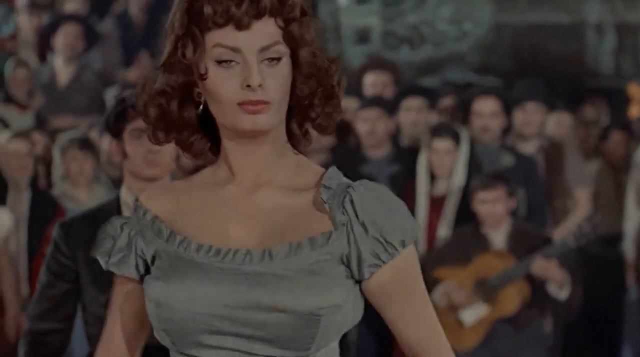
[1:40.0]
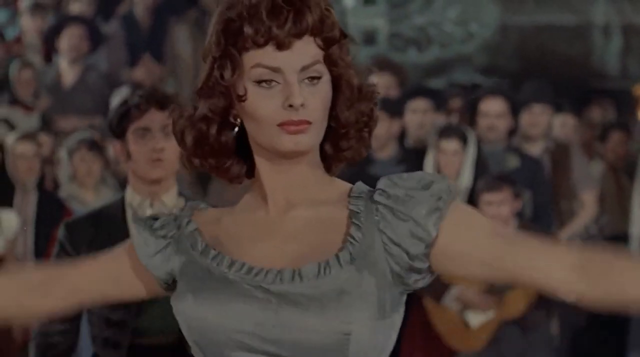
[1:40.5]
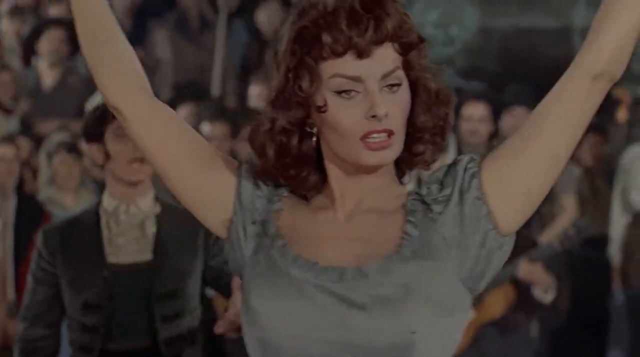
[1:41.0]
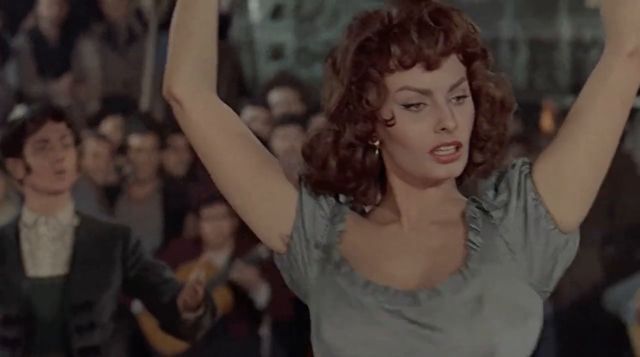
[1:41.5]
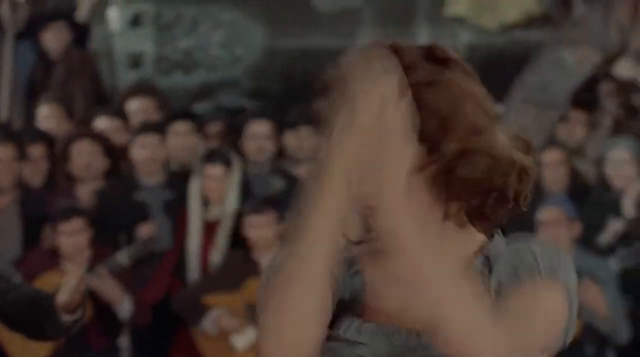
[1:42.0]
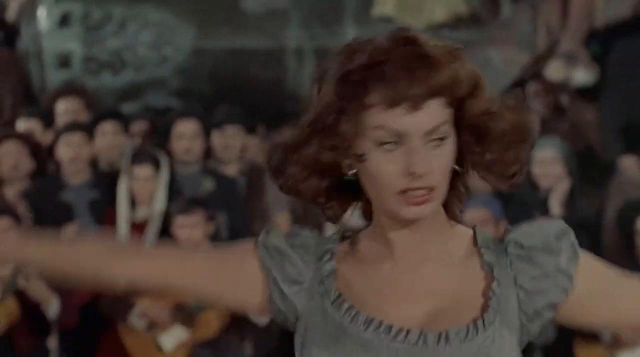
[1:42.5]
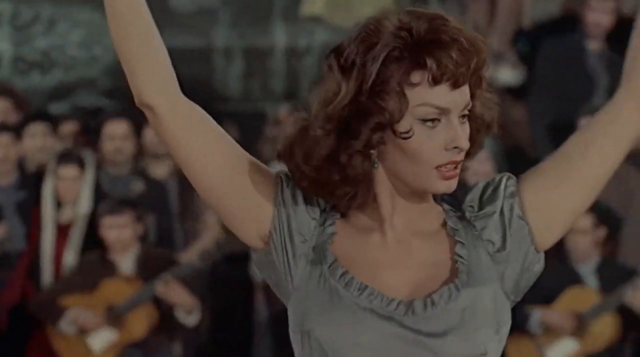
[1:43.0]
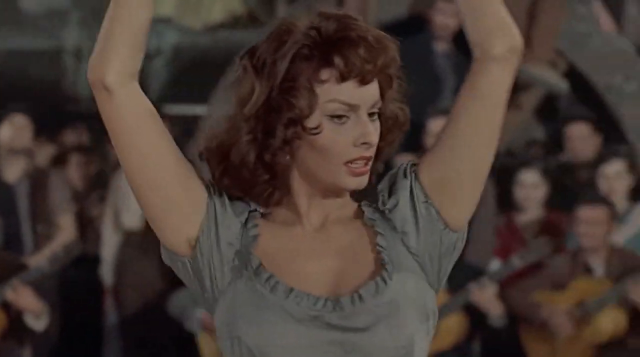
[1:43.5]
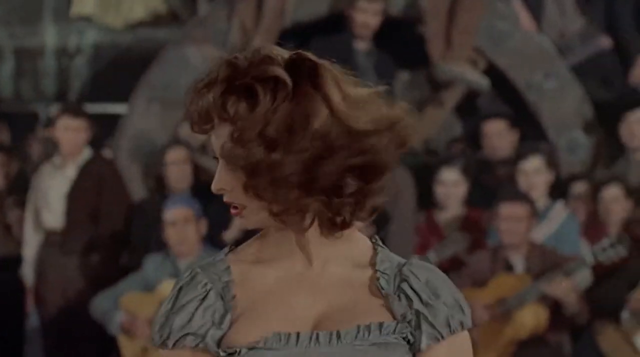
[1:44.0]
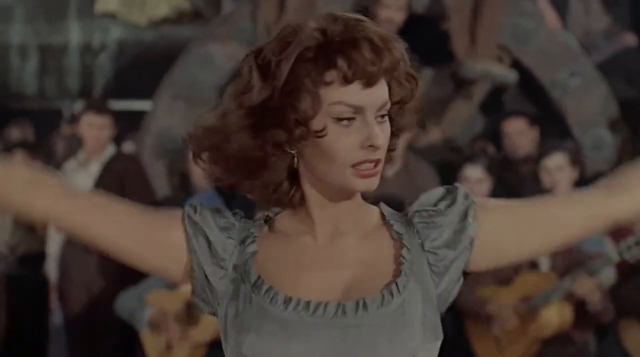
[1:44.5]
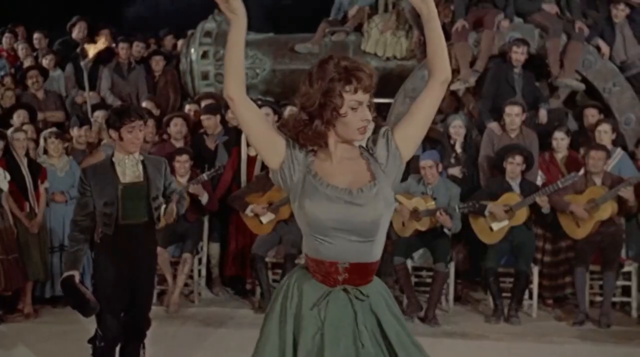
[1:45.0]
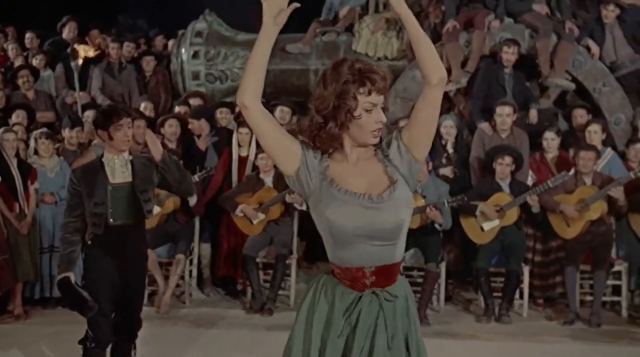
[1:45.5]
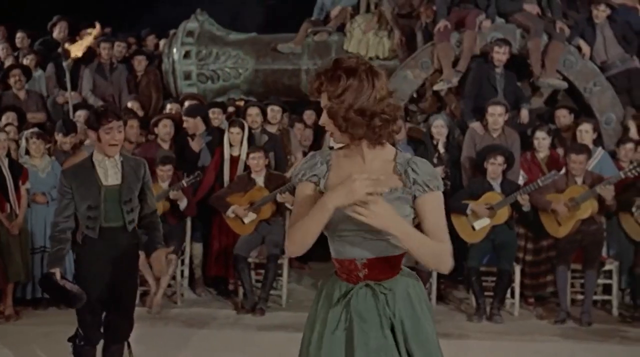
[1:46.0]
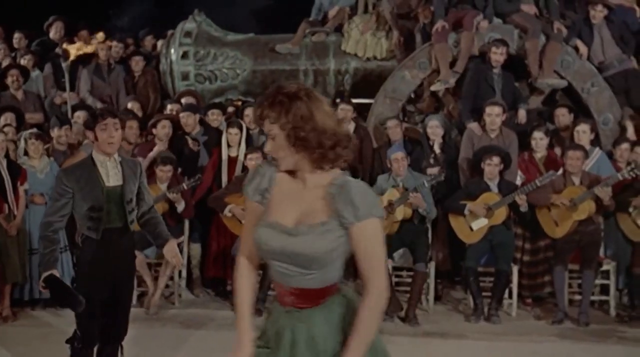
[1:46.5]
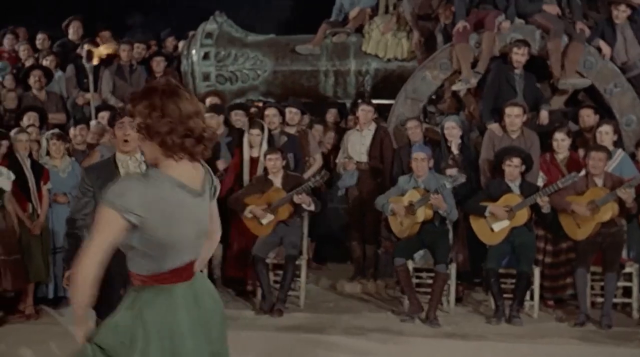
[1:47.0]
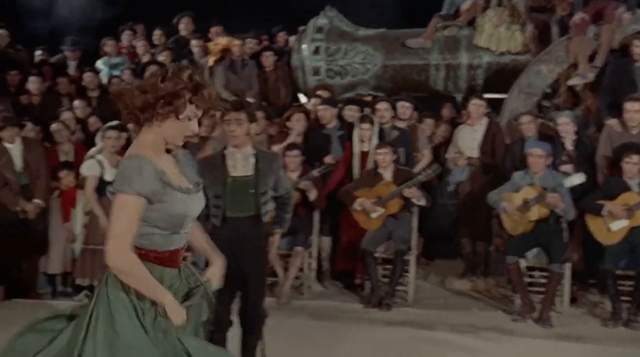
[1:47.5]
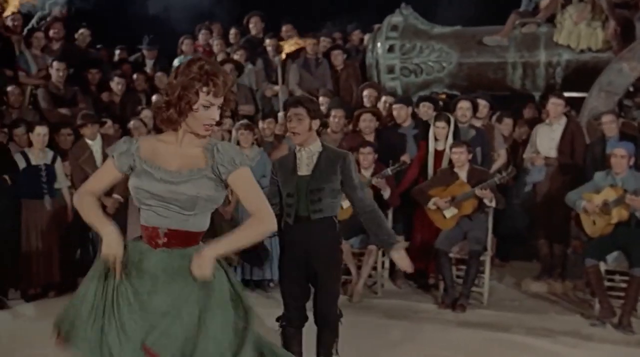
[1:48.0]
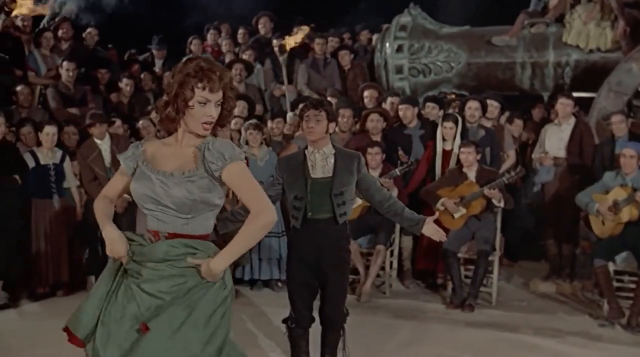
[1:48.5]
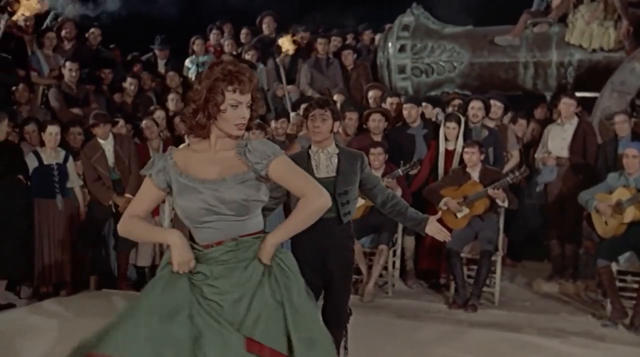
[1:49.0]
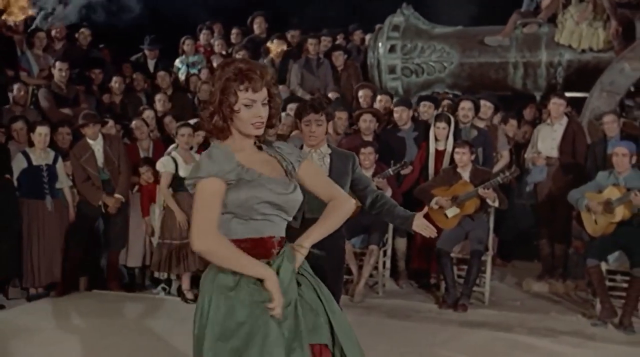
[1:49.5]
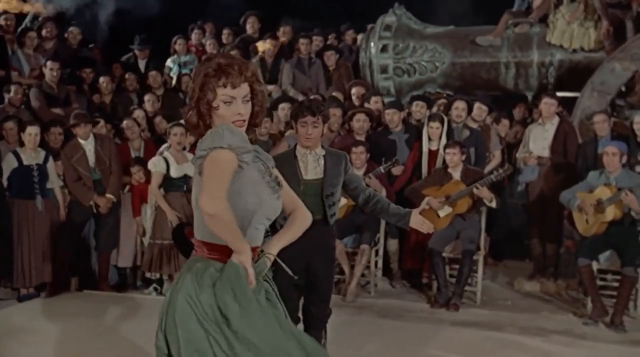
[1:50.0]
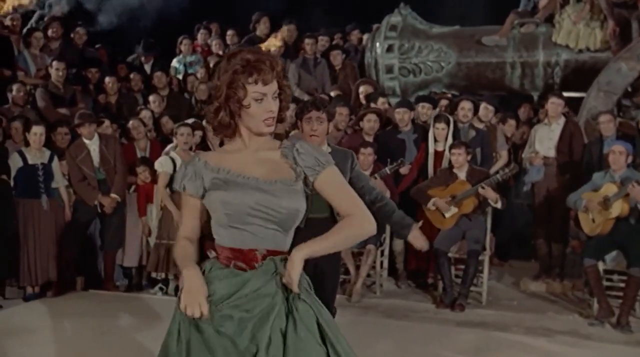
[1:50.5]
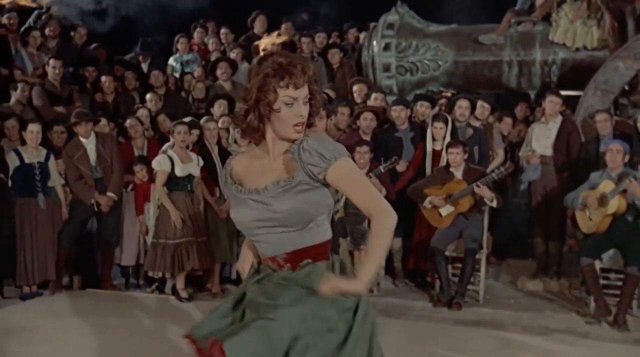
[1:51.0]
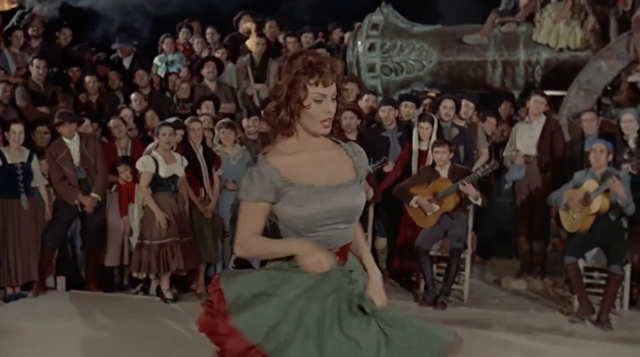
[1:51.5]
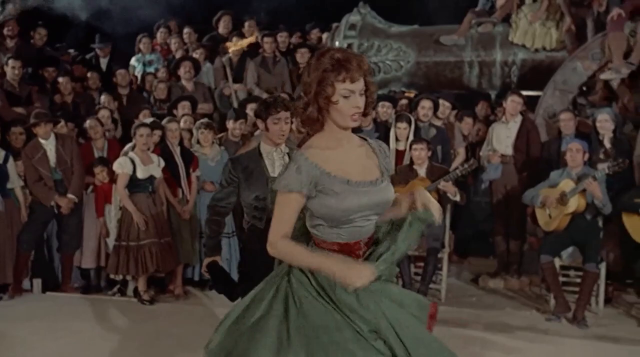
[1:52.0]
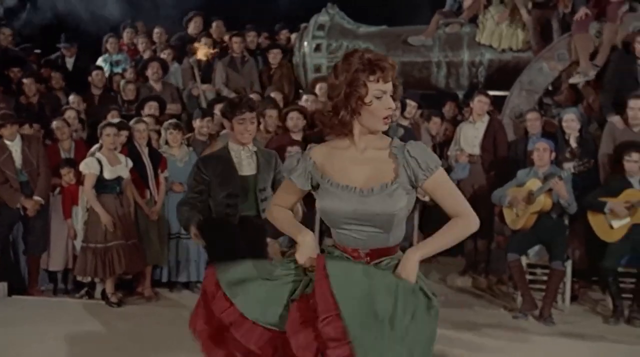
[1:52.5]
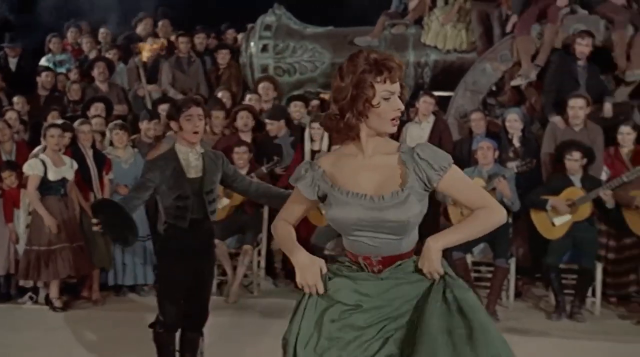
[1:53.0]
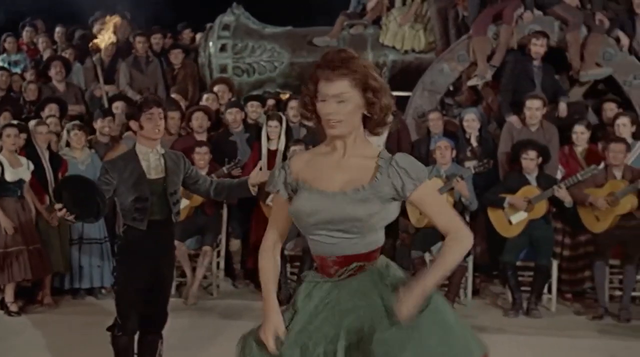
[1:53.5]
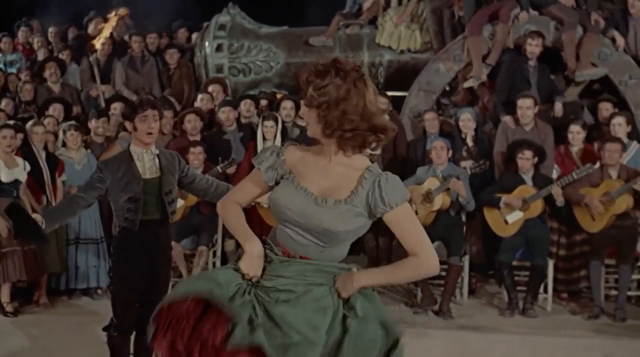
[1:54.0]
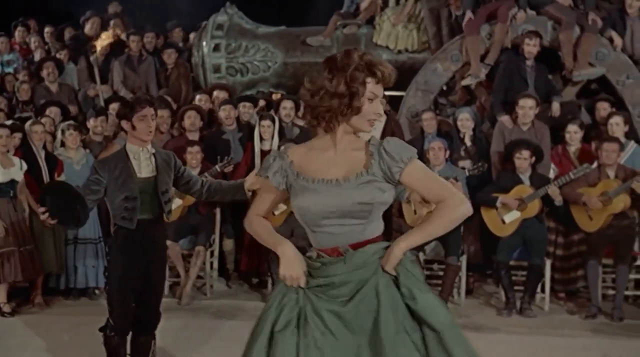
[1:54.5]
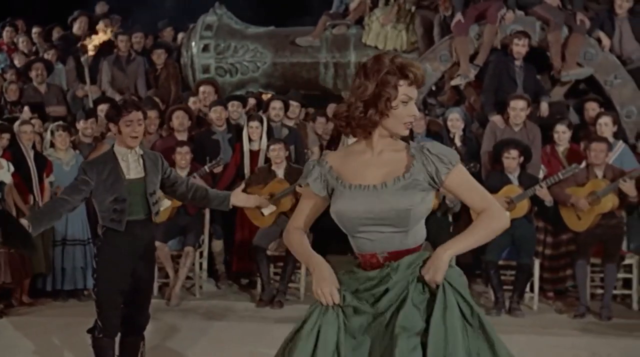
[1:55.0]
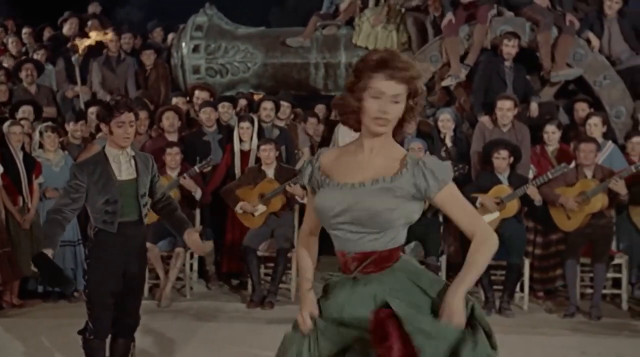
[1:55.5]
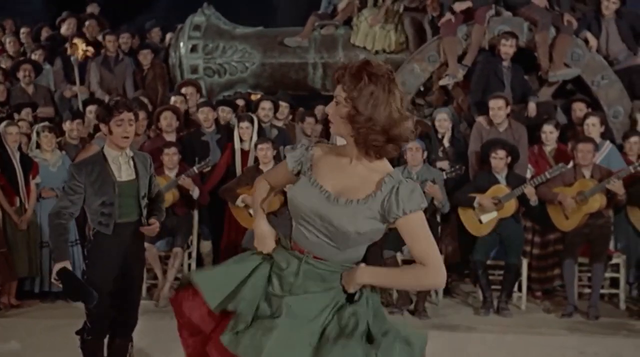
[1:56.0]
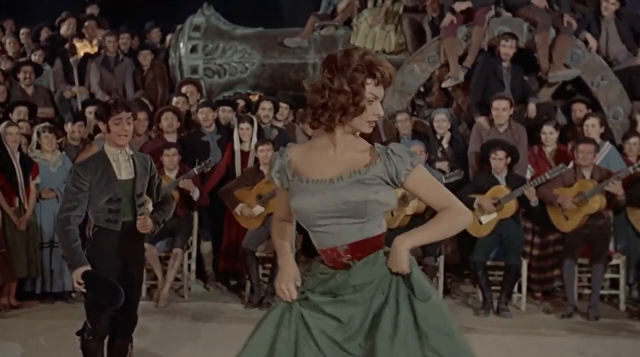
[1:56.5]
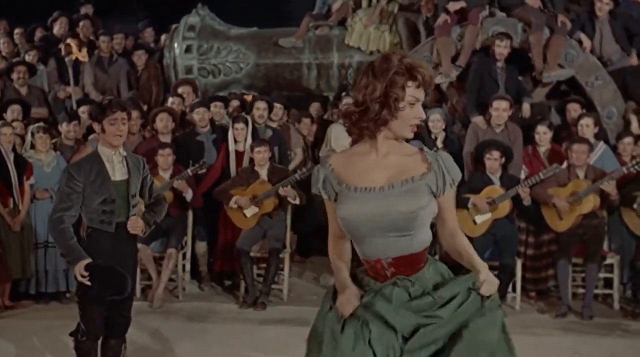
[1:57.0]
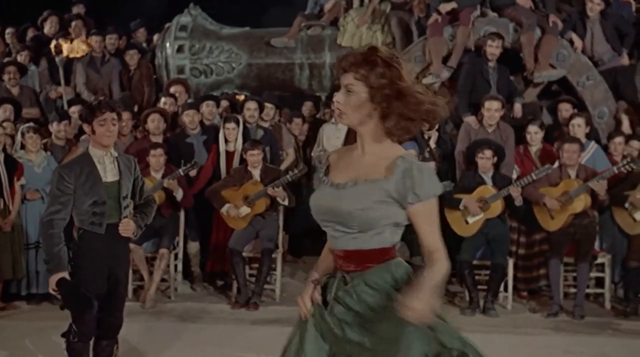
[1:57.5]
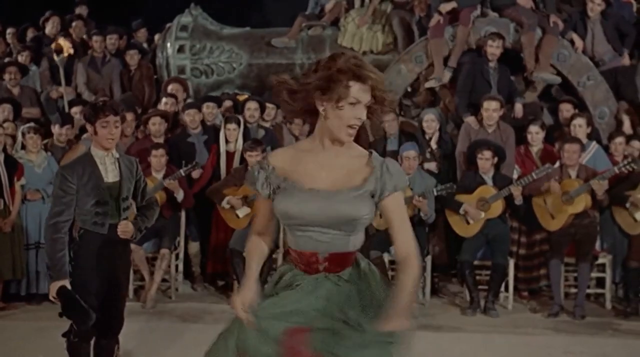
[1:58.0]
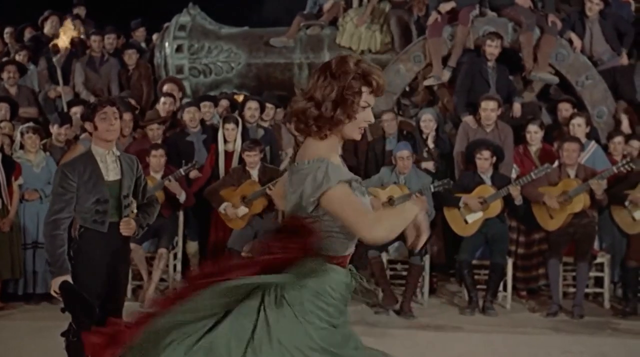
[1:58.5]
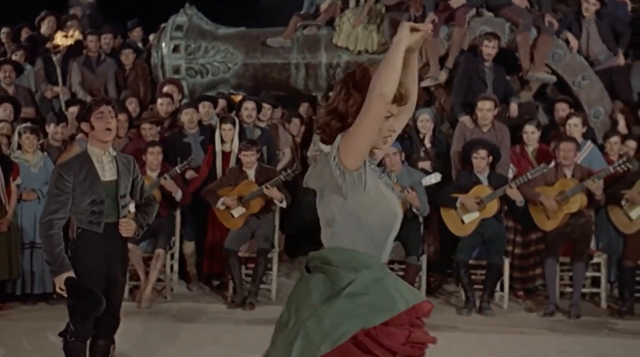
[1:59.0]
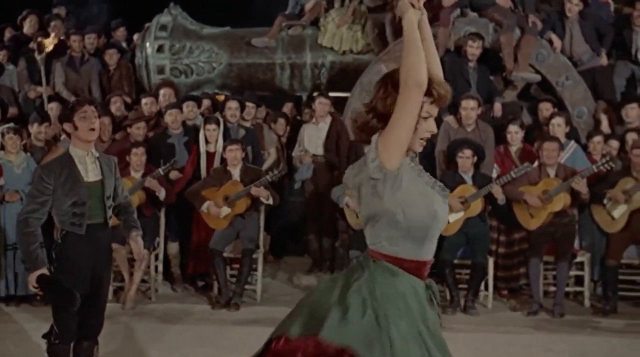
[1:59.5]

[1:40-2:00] The woman dances, and the man who asked her to dance is also in the performance area. It is unclear whether he is singing or telling her what to do next in the dance. She seems to know how to dance to this music. He wears a greyish greenish outfit almost like a matador's, with a short jacket, looking very smart, and boots. He has dark hair and appears very confident at the centre of the arena. The audience is all still there and still enjoying it. The focus is mostly on her dancing; at the beginning she is sort of shimmying and showing the dance off to the audience.